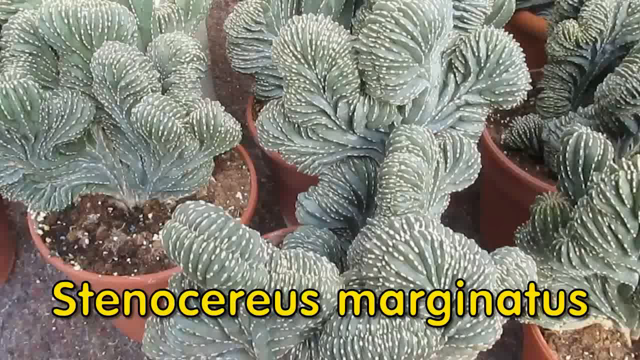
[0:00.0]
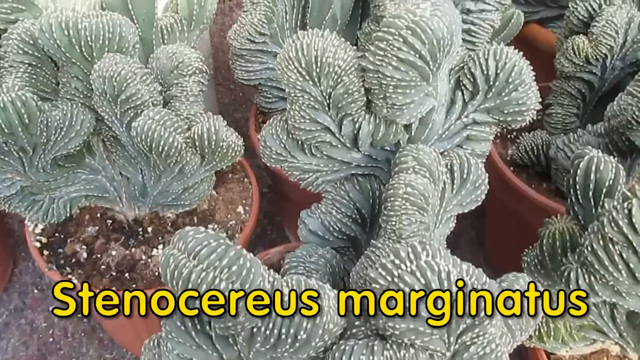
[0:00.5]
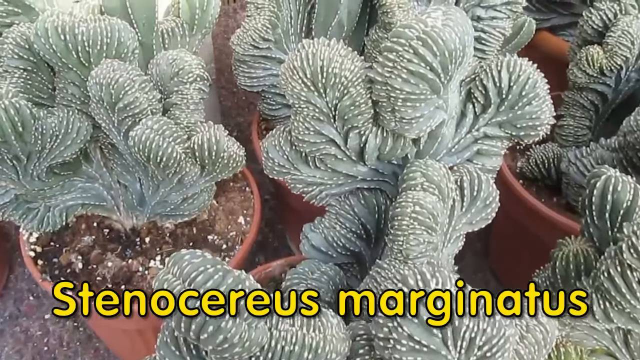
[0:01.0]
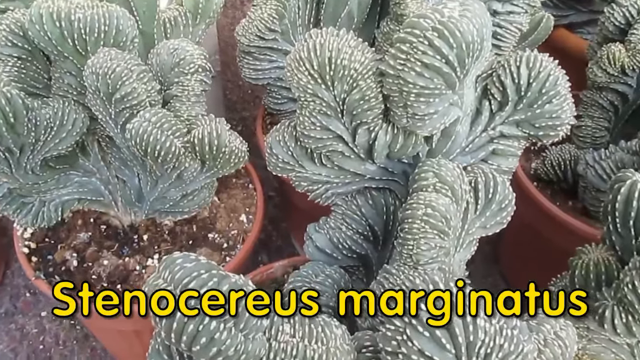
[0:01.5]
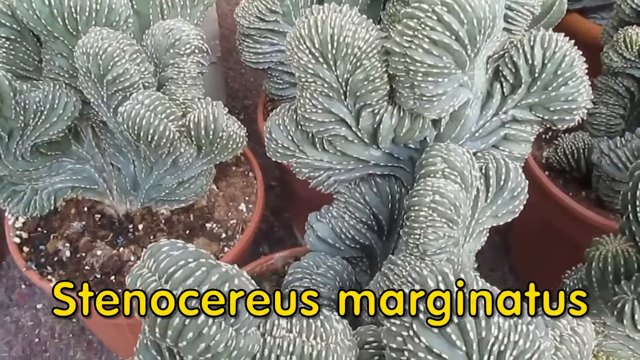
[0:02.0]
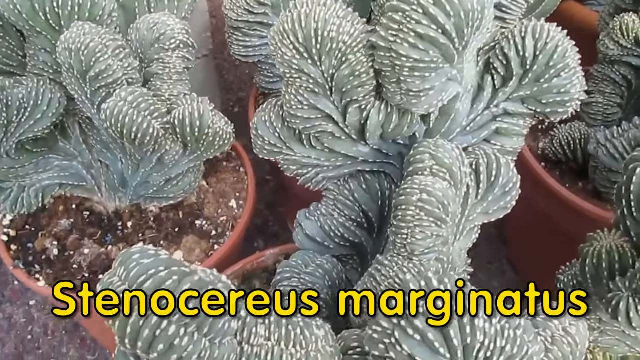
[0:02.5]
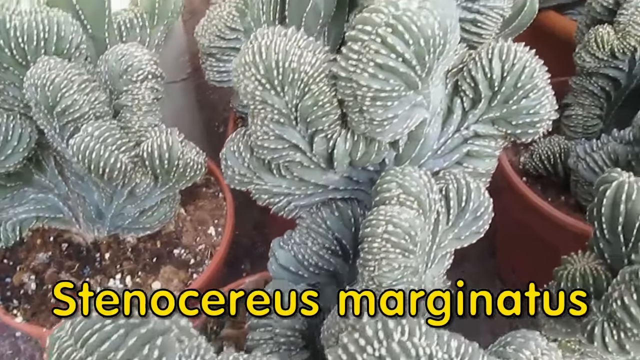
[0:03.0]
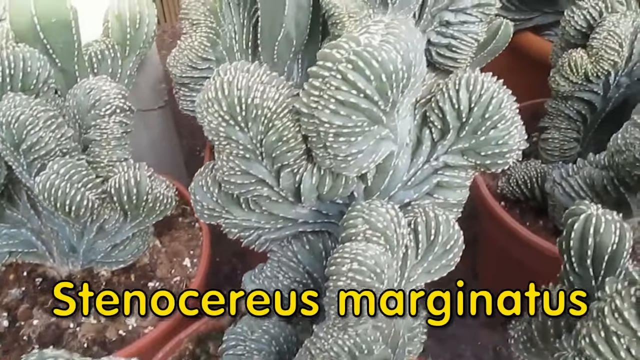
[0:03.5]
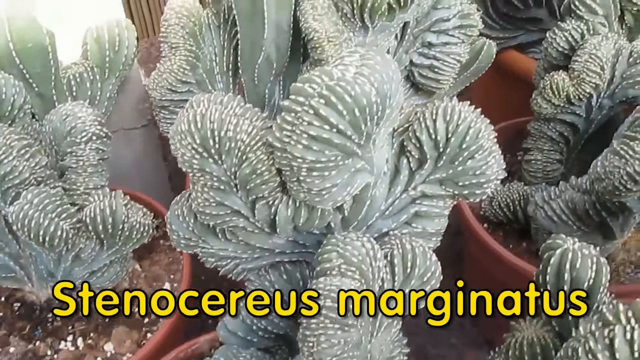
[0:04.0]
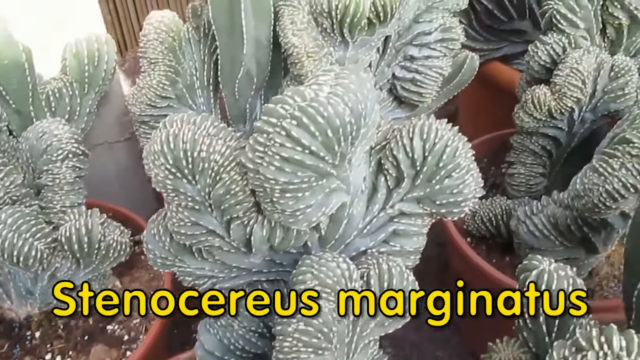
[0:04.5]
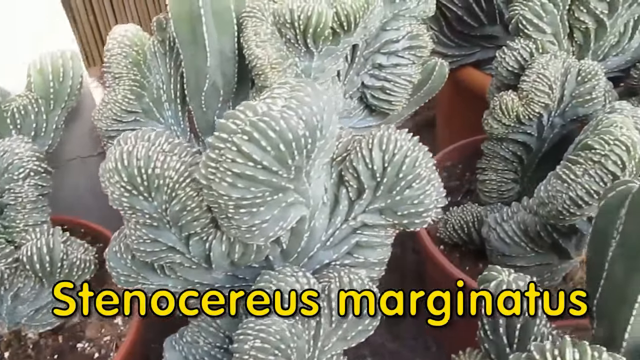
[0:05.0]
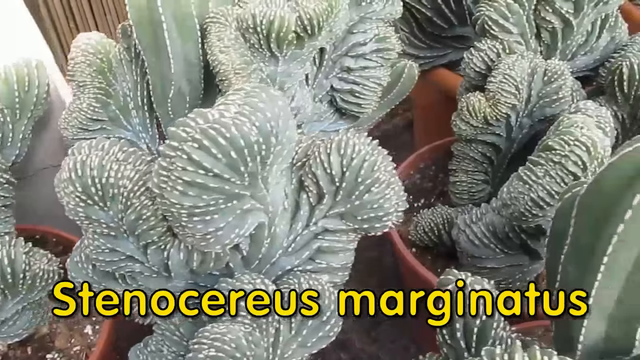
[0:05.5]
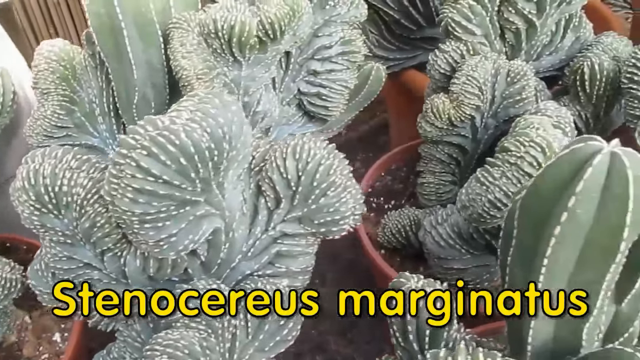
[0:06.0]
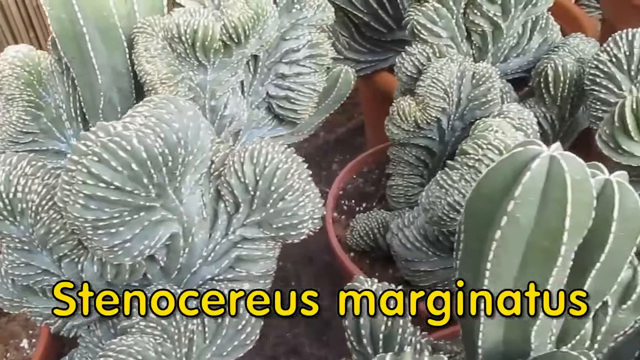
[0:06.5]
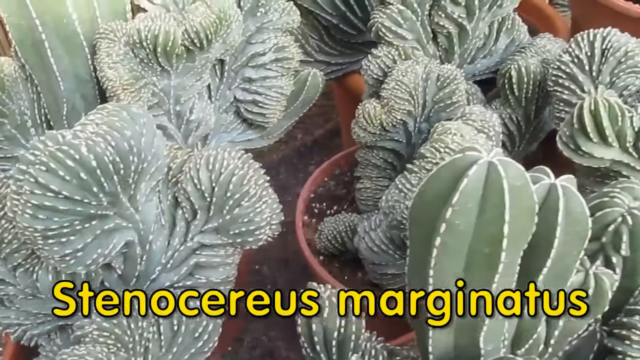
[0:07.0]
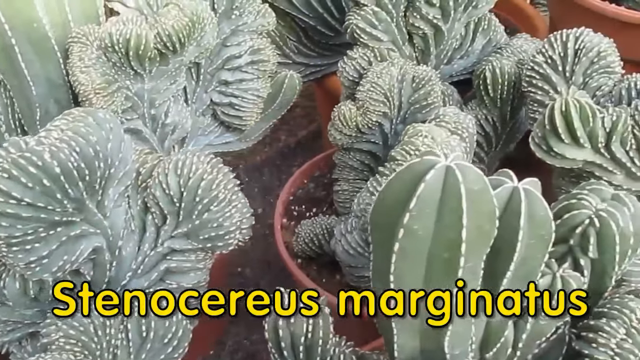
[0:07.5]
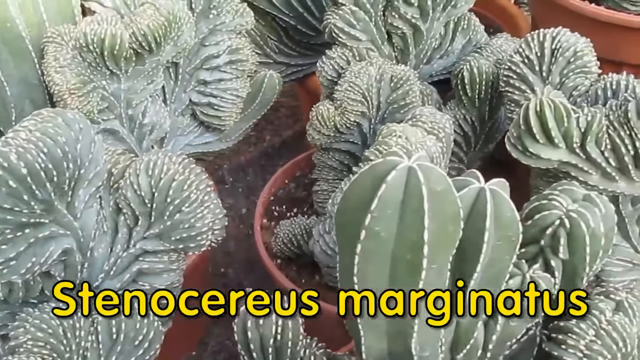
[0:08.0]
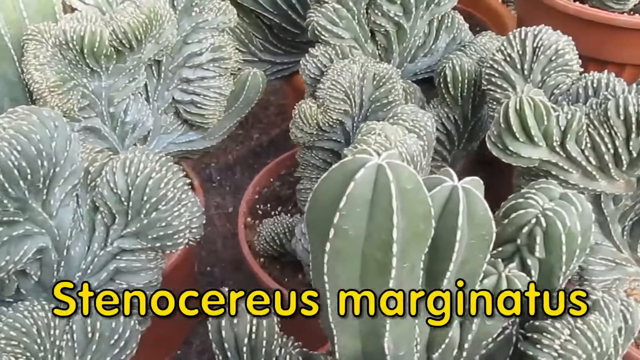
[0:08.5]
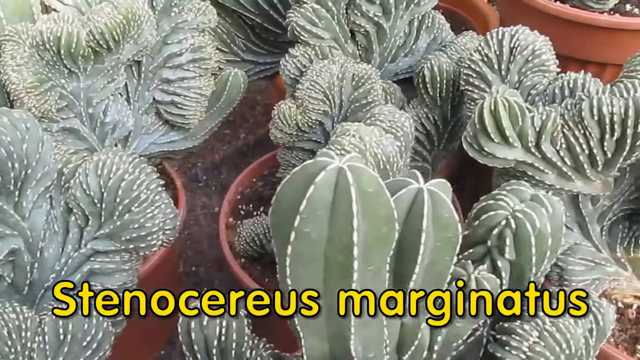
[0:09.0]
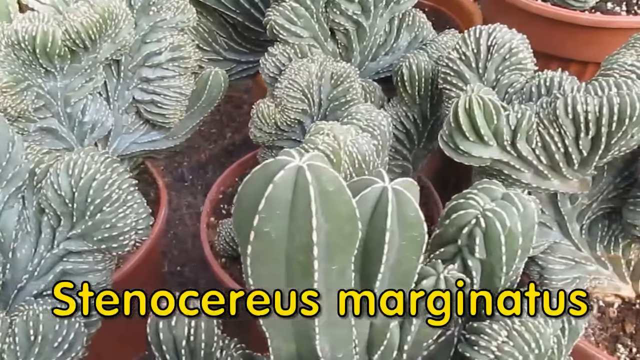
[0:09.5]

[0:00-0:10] What looks to be a succulent plant is shown, with its scientific name captioned at the bottom of the video: "Stenocereus marginatus". The caption text is yellow and bordered in black. The plant has a very interesting textured look that almost resembles ribbon candy. Next to it is a cactus that maybe looks more like a typical cactus compared to this one. The cactuses are in brown pots with soil inside them. It looks sunny, and the plants are outside.